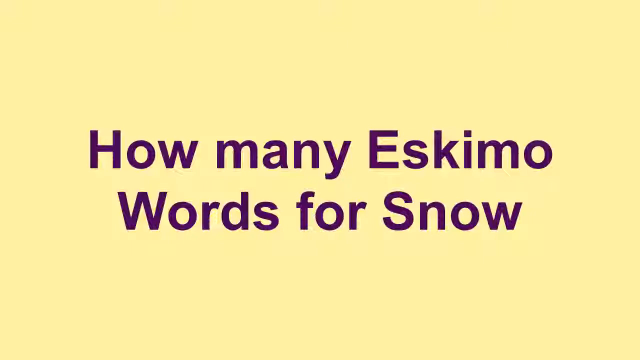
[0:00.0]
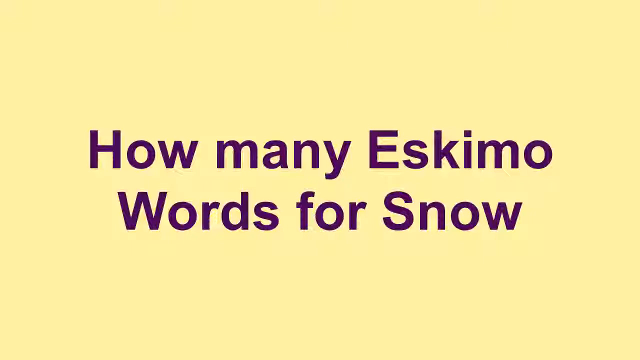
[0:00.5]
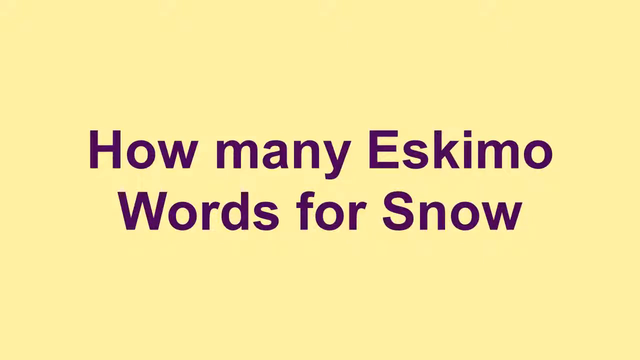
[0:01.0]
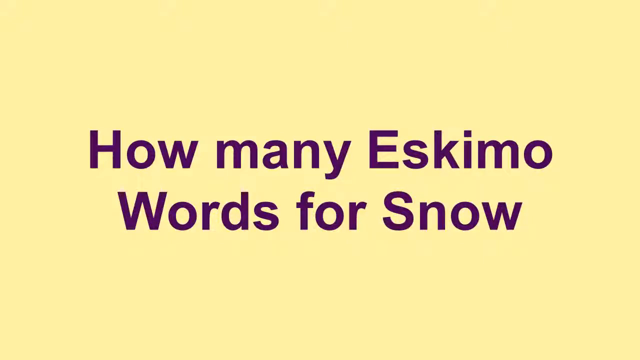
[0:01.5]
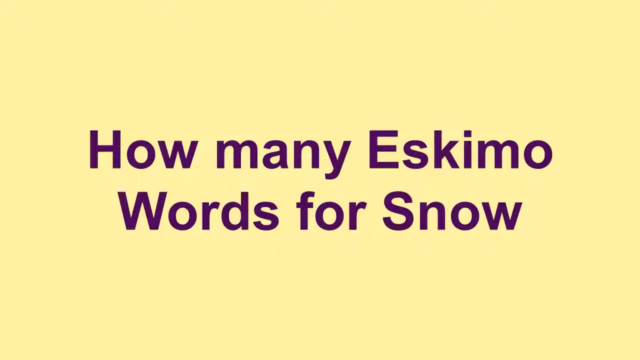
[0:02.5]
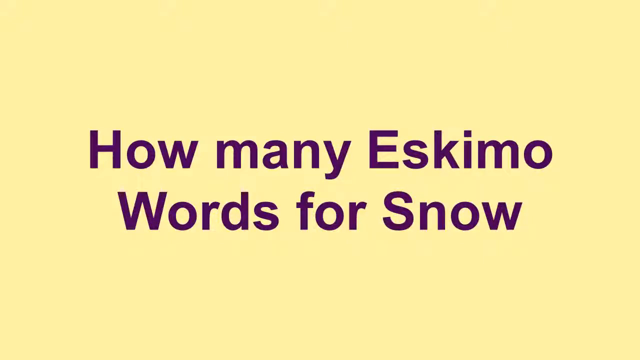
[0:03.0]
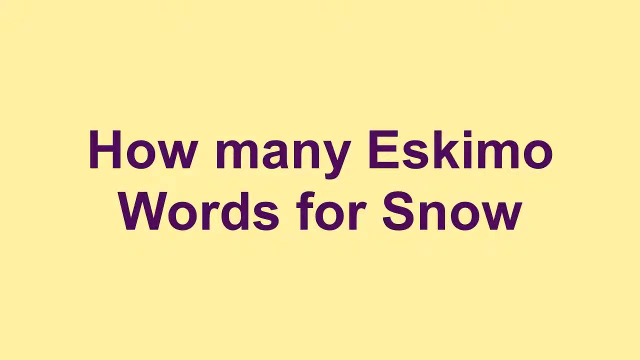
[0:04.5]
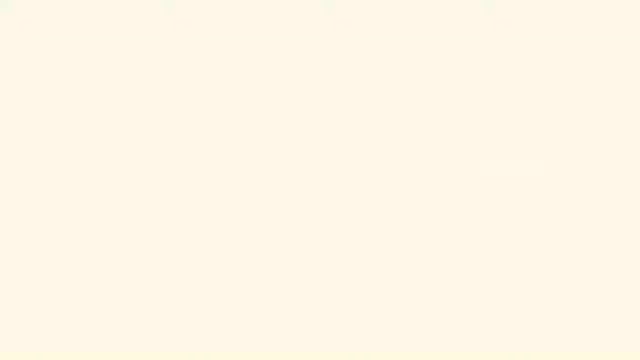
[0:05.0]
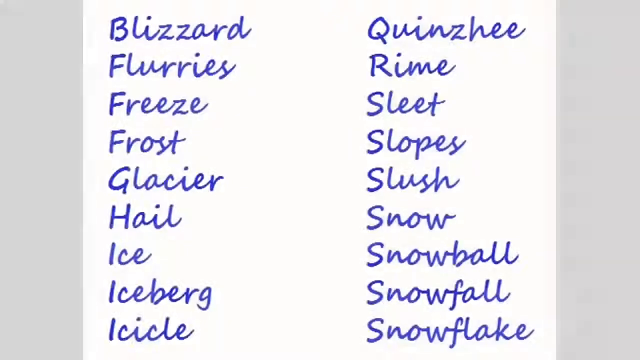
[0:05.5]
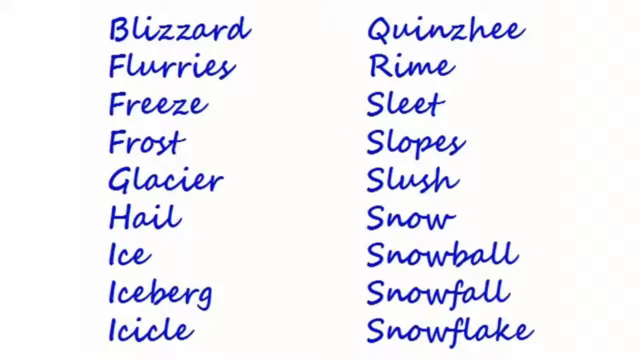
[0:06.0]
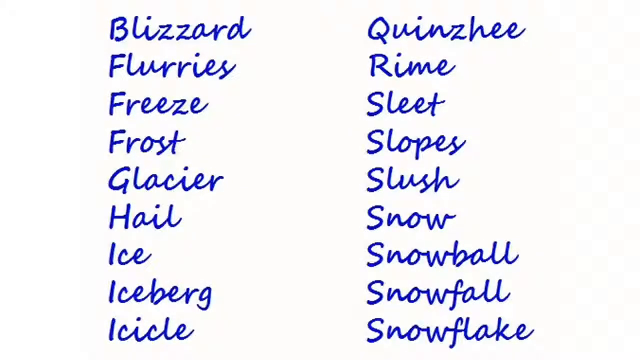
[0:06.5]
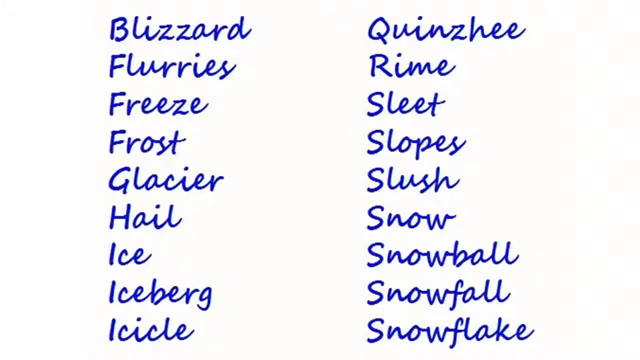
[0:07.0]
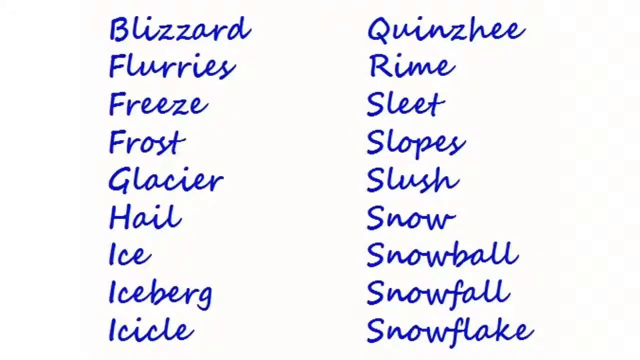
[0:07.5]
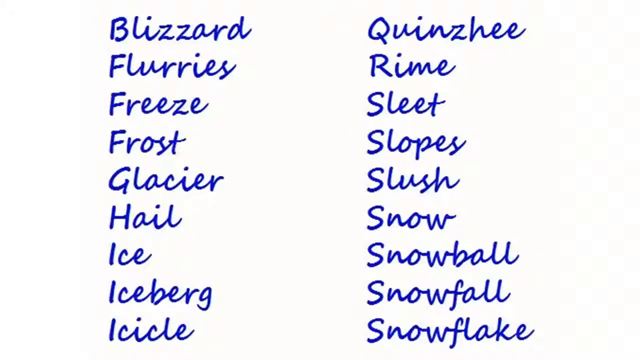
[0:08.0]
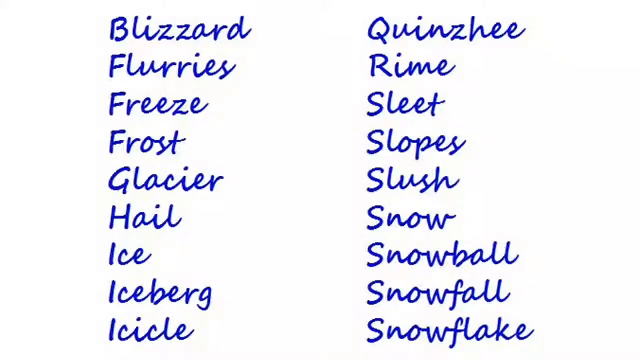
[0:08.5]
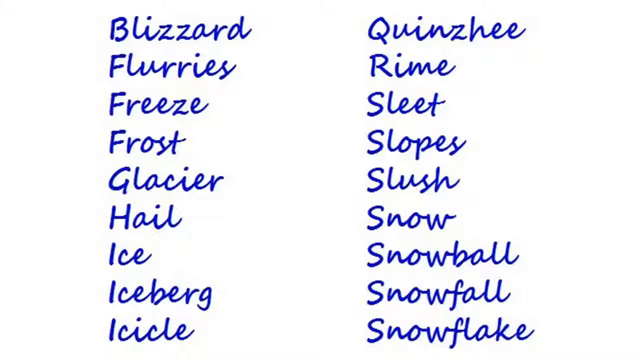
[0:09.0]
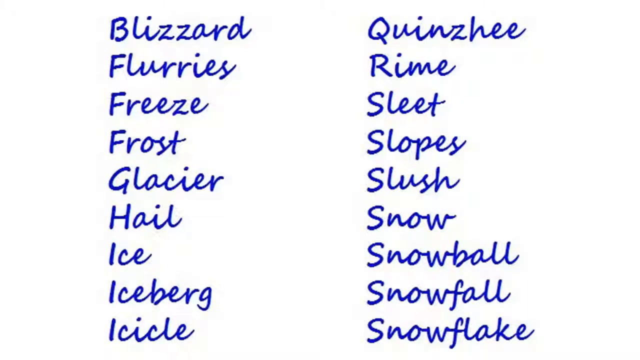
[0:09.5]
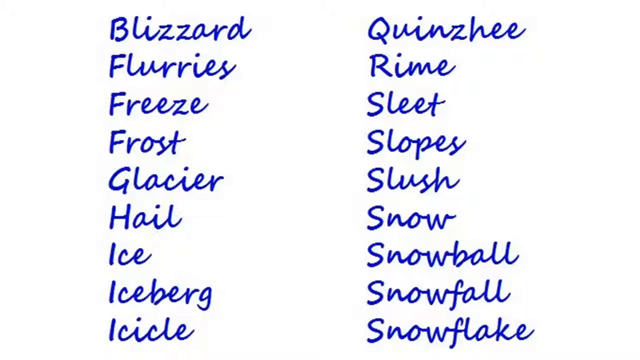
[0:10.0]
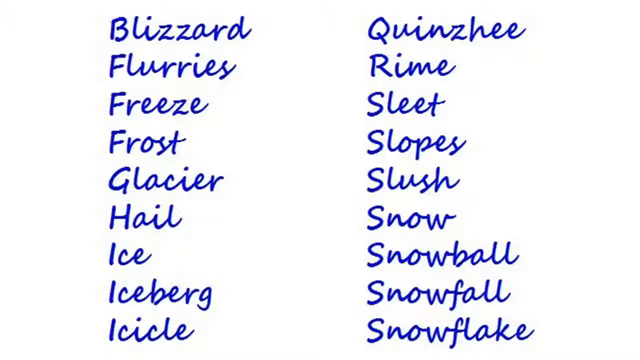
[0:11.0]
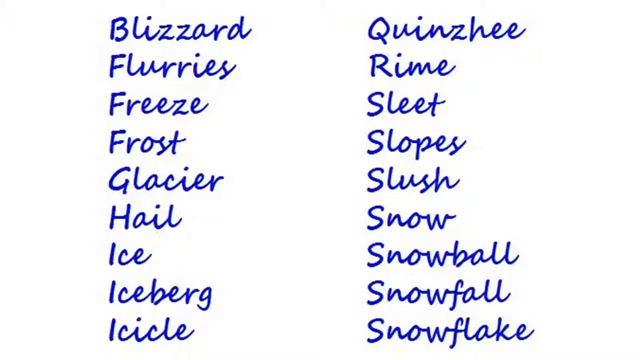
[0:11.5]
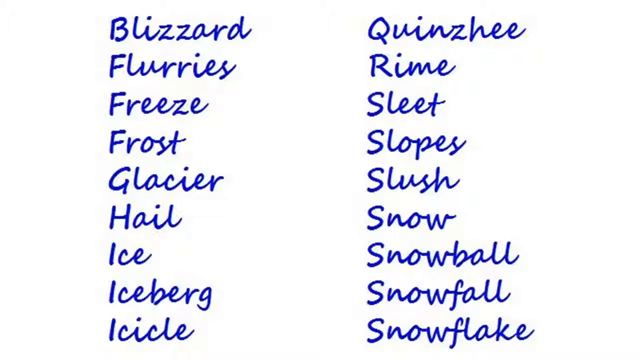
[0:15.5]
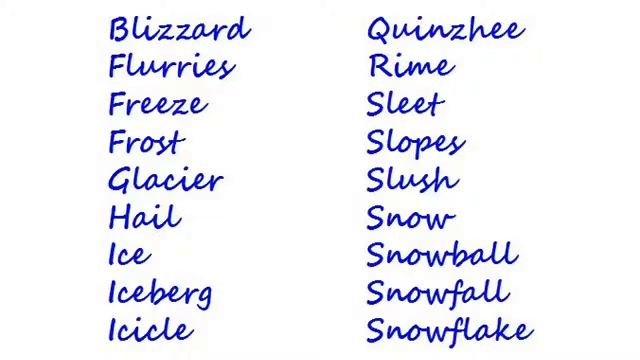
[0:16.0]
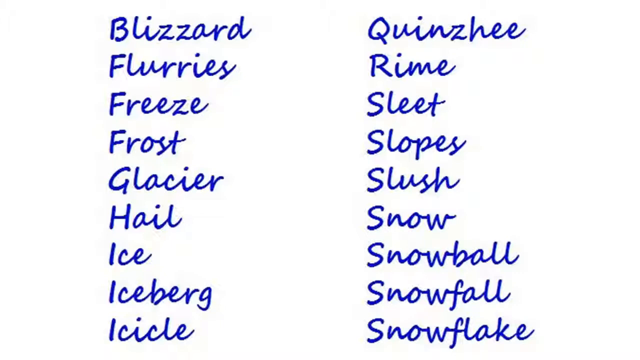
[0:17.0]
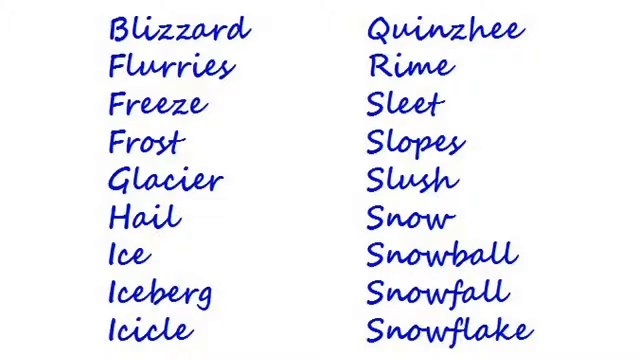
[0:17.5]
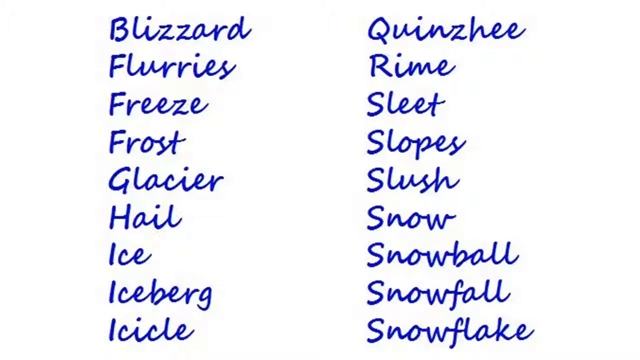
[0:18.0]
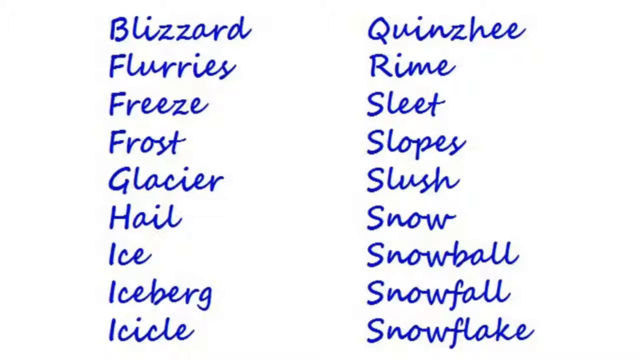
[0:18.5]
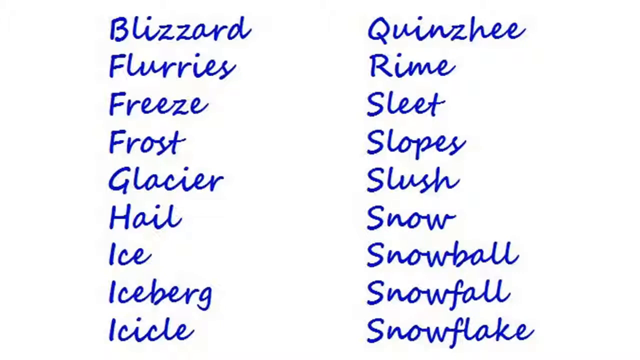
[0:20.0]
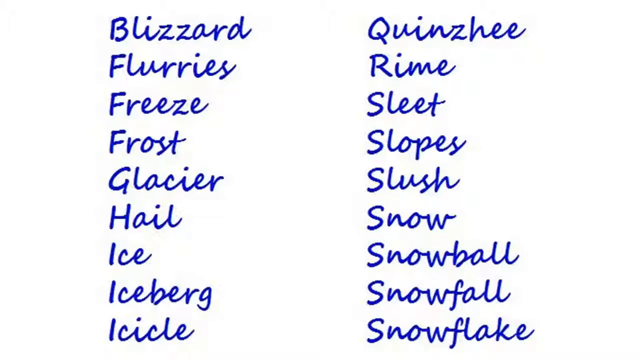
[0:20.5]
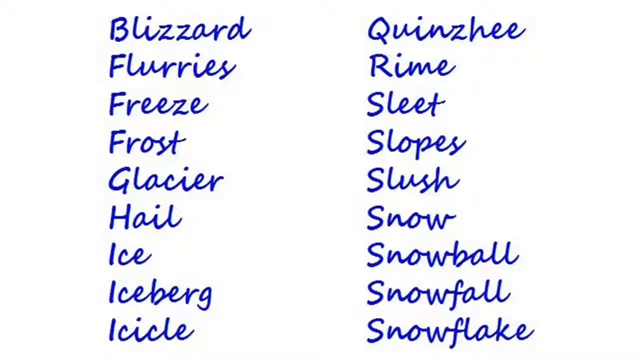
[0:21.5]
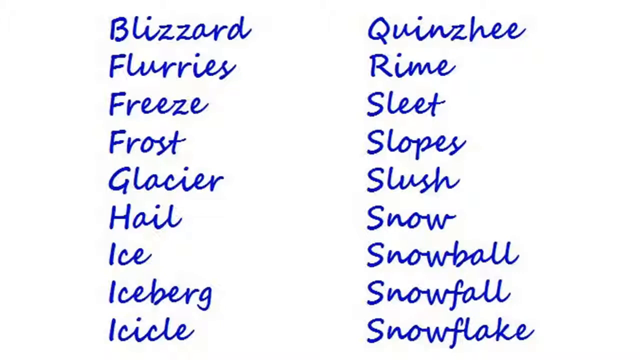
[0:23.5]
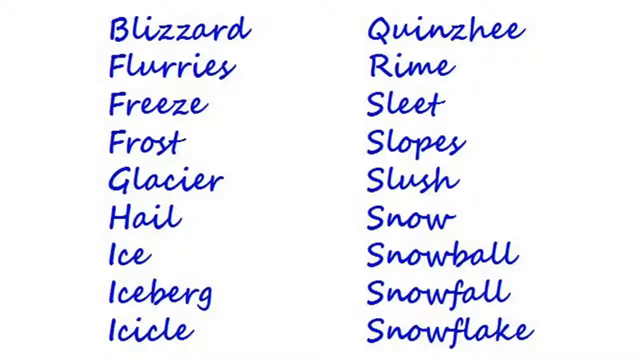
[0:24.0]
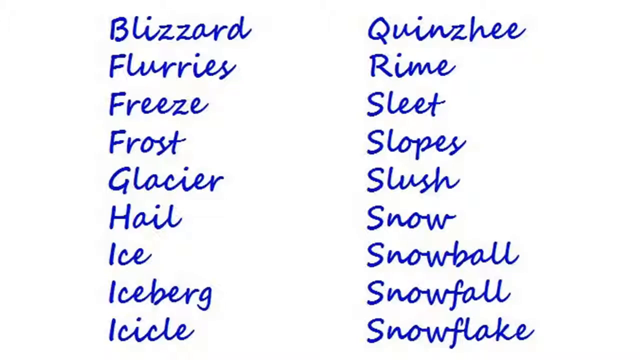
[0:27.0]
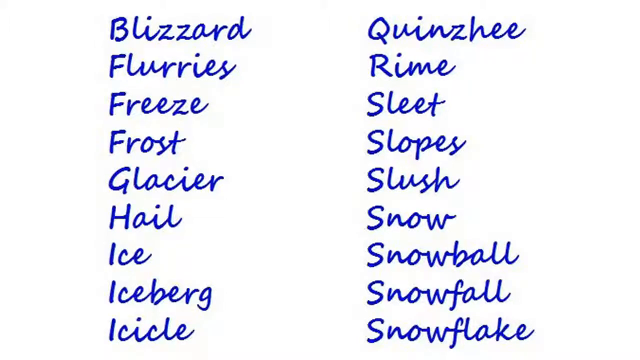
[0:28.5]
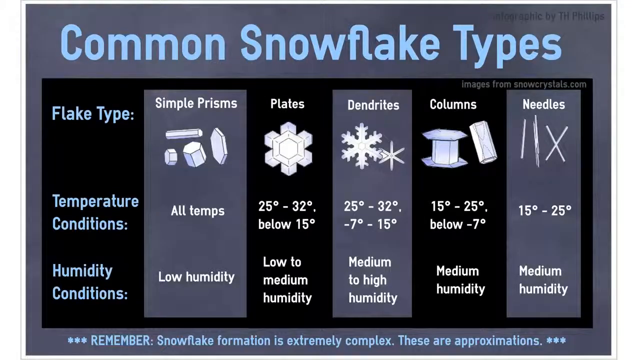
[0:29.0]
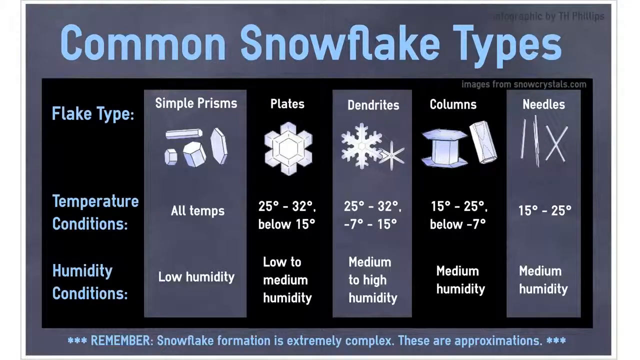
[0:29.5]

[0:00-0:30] On a yellow background, text asks how many words there are for snow, and these words stand out; there is something in blue or pink. The video presents different words used to refer to snow or weather phenomena. The first word is "blizzard," followed by a second word.